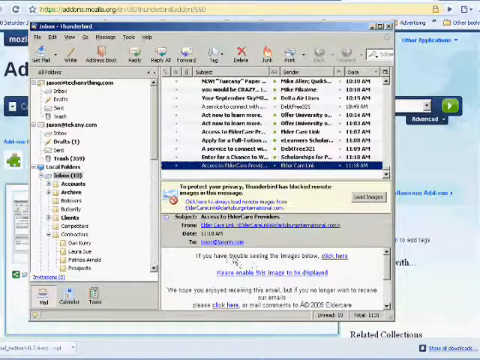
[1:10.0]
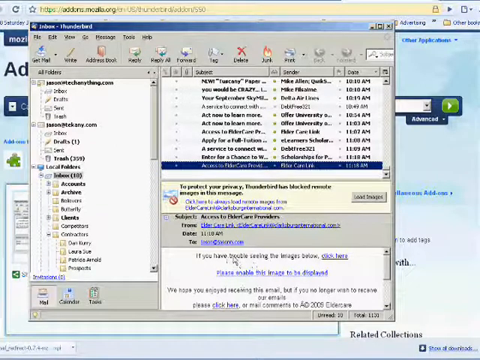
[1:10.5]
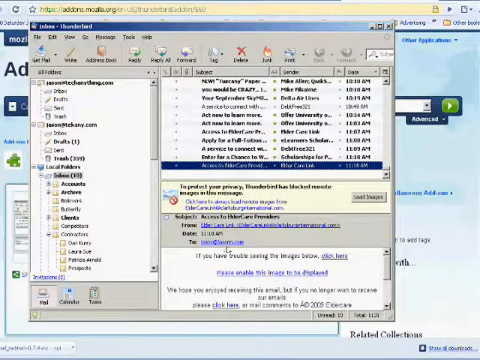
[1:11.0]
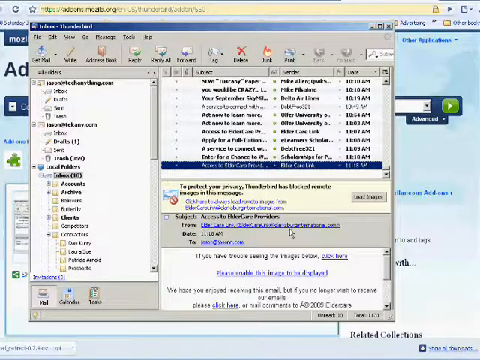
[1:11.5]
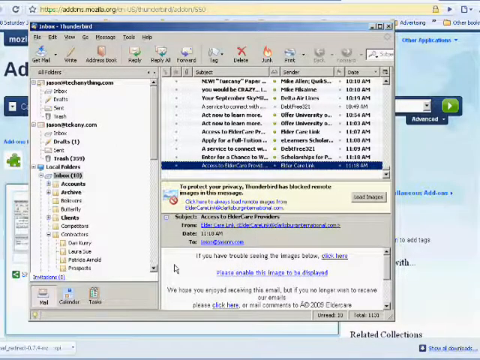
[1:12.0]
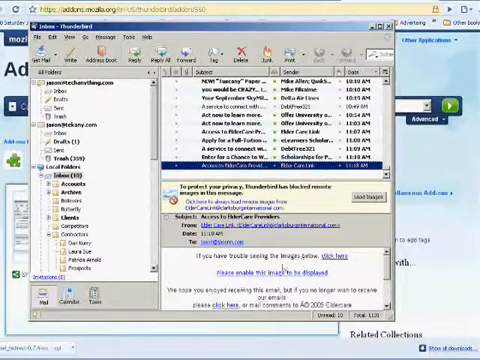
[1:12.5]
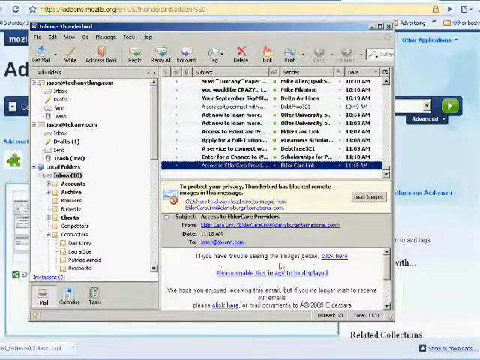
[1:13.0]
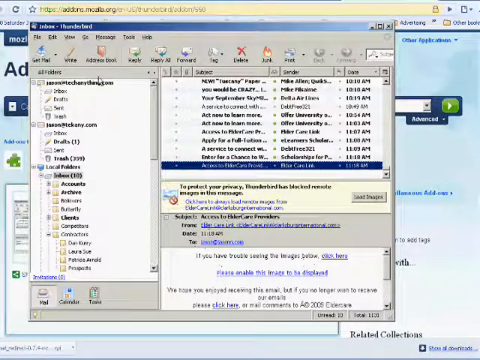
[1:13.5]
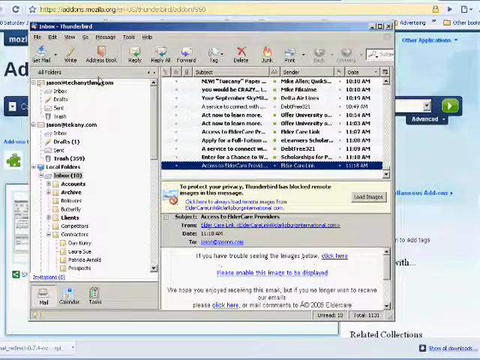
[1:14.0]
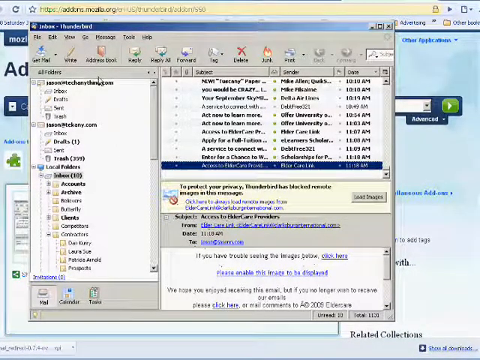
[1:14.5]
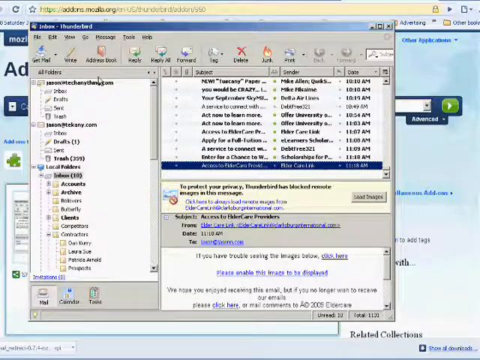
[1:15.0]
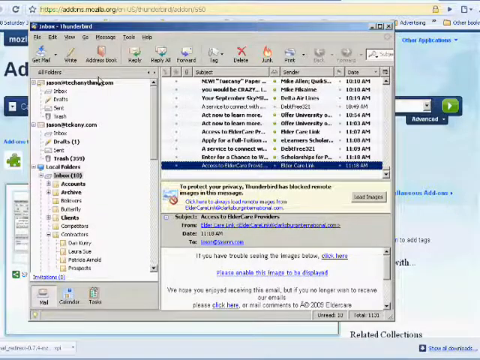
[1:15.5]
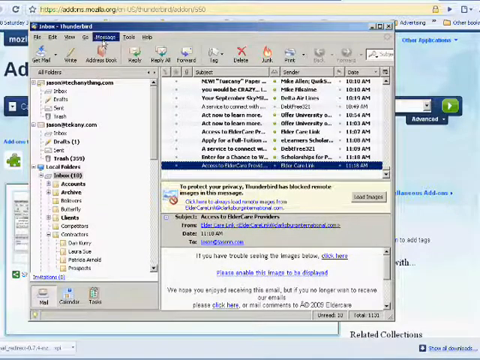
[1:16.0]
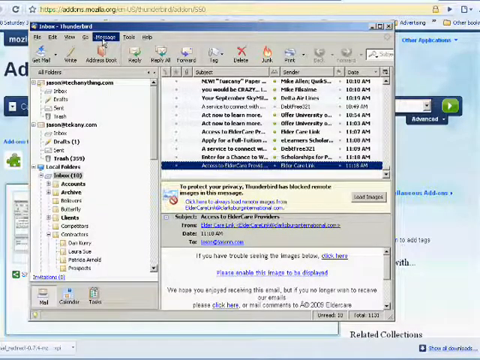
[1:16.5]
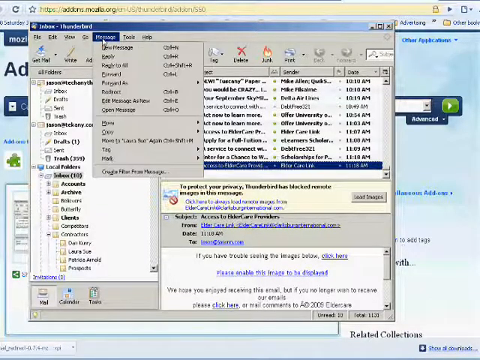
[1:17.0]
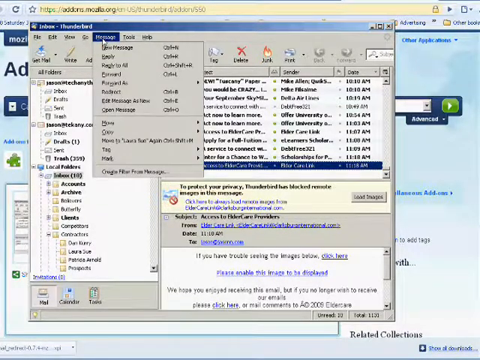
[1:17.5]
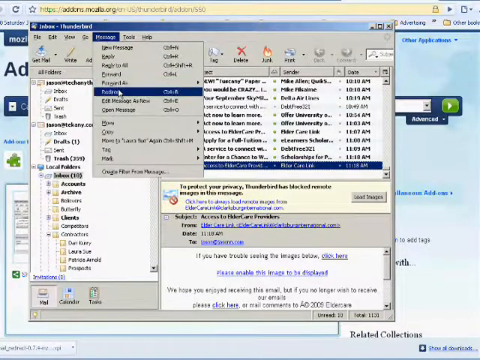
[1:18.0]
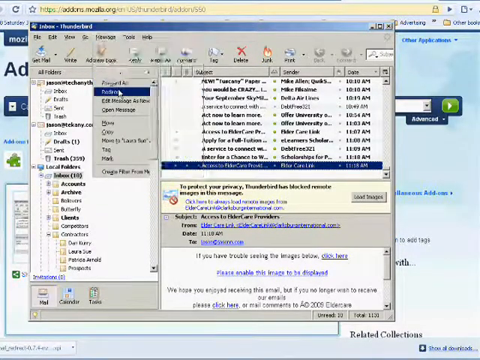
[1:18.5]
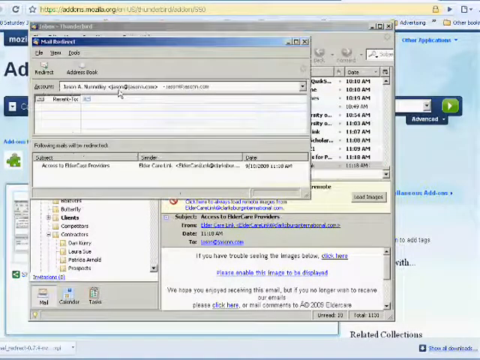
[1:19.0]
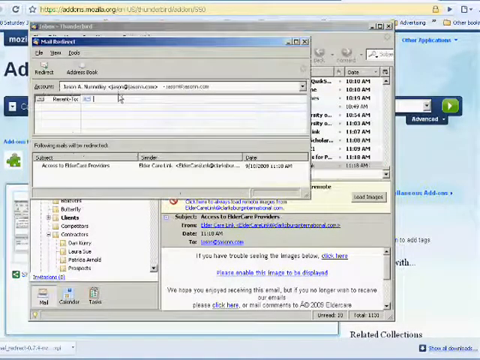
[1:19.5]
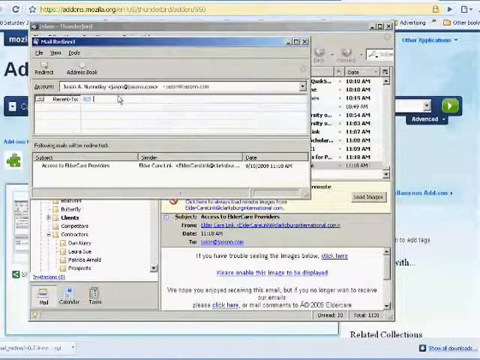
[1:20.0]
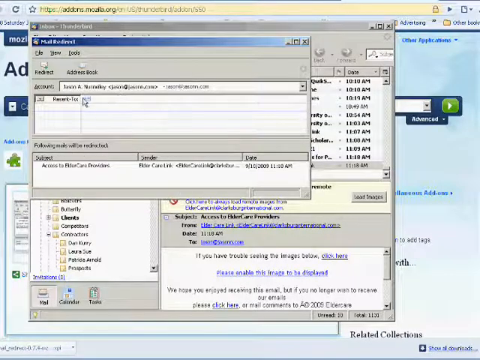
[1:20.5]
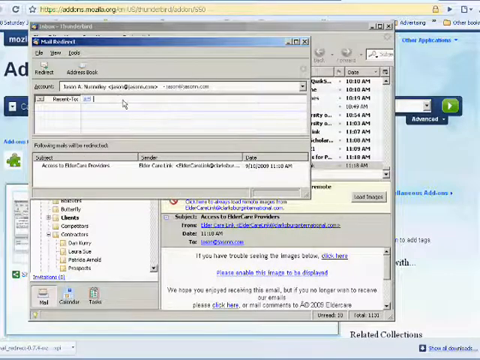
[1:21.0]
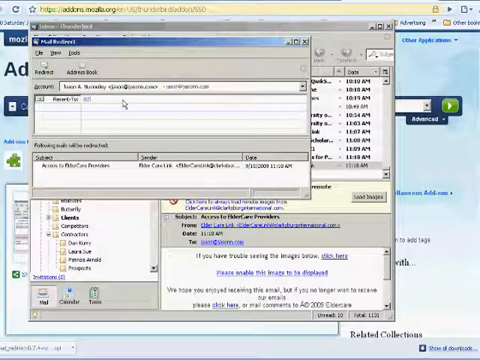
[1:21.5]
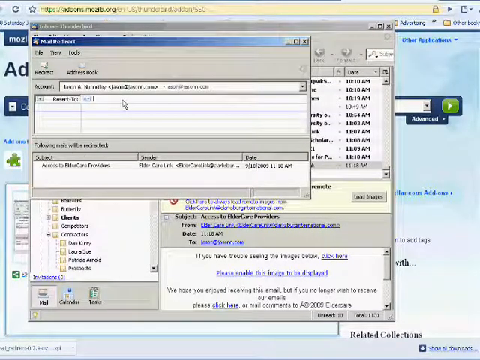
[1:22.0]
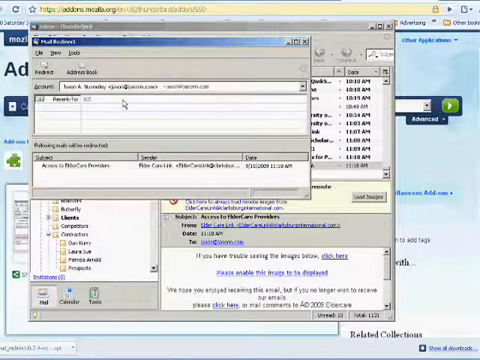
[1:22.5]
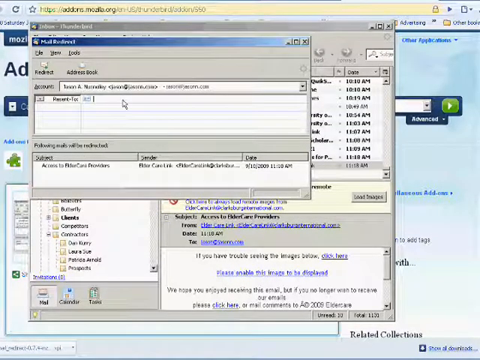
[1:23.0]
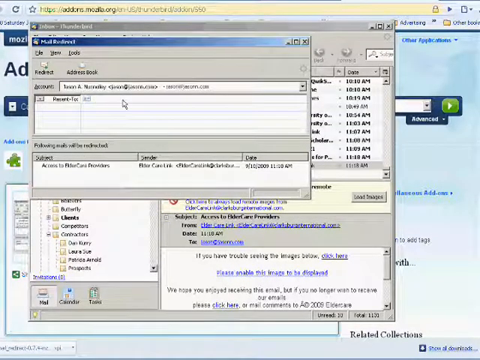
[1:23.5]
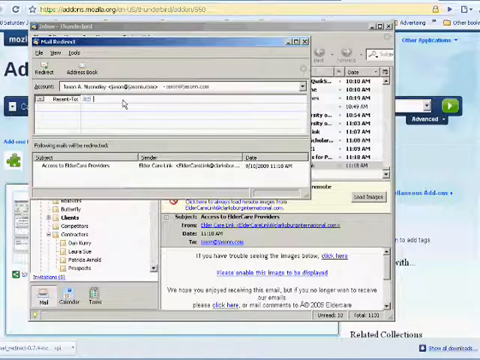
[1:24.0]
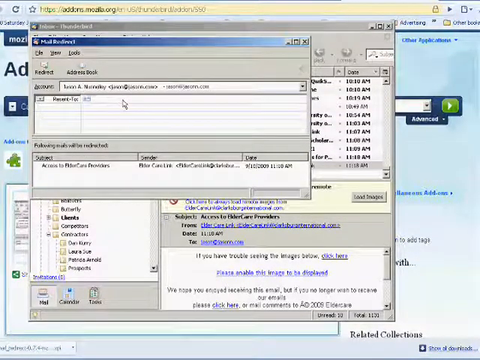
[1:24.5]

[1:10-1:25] The cursor gestures around the message that came up when the last email, apparently from elder care link, was selected. It says "to protect your privacy Thunderbird has blocked" some sort of image in the message, and an information box underneath says "if you are having trouble seeing the image below click here" and asks to enable this message to be displayed. The cursor then moves up to the toolbar and selects message, bringing up options to reply, send a new message, or add some sort of filter. A pop-up window for this particular sender comes up.